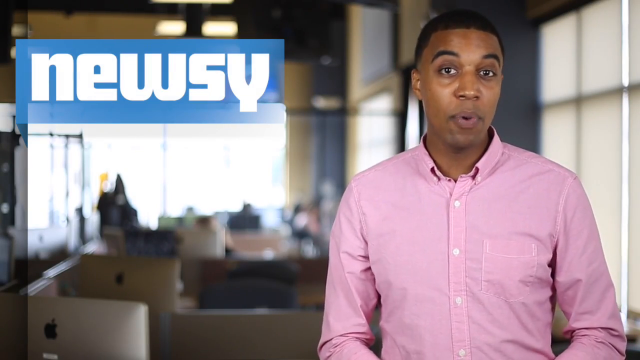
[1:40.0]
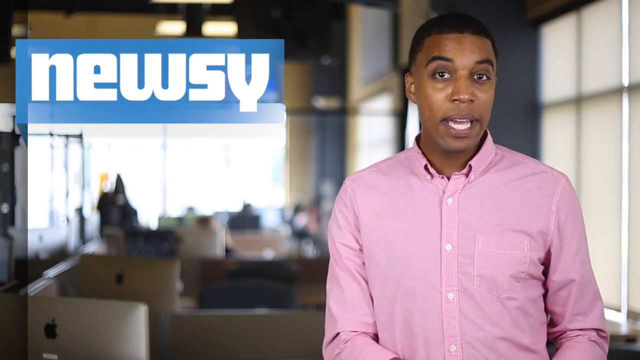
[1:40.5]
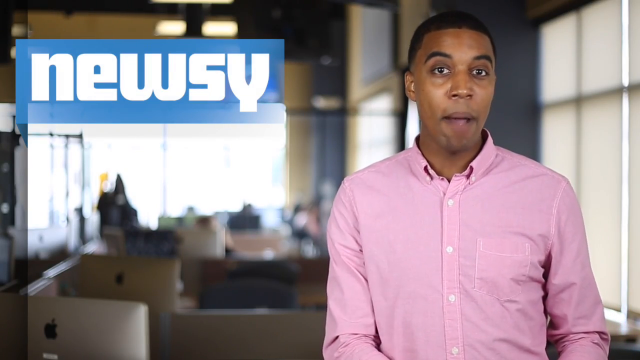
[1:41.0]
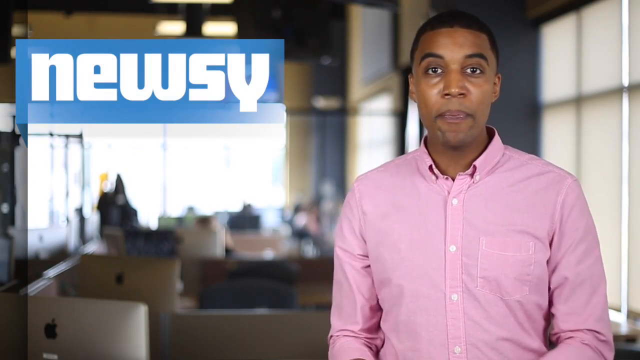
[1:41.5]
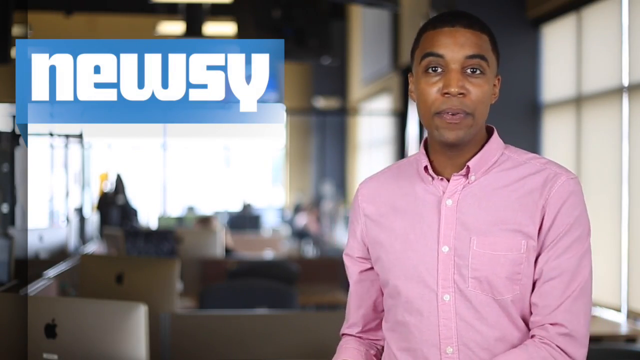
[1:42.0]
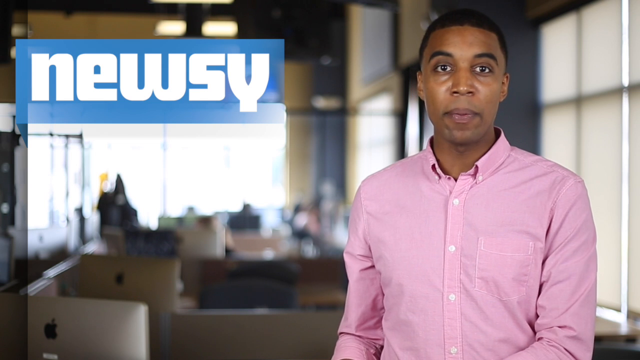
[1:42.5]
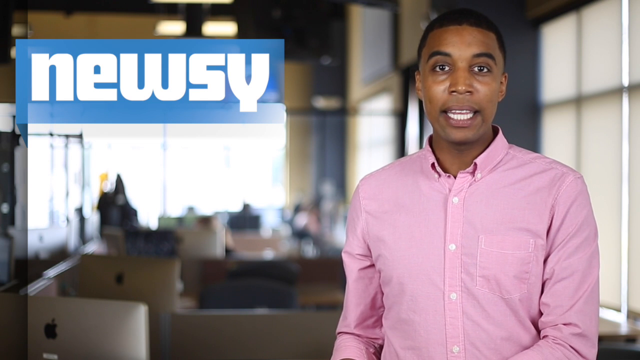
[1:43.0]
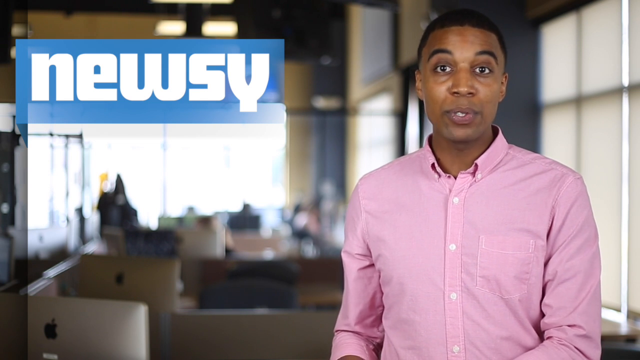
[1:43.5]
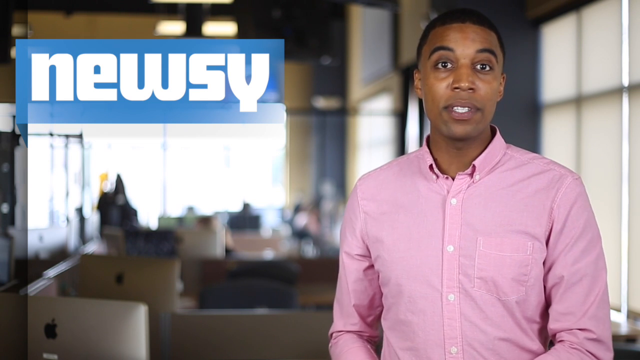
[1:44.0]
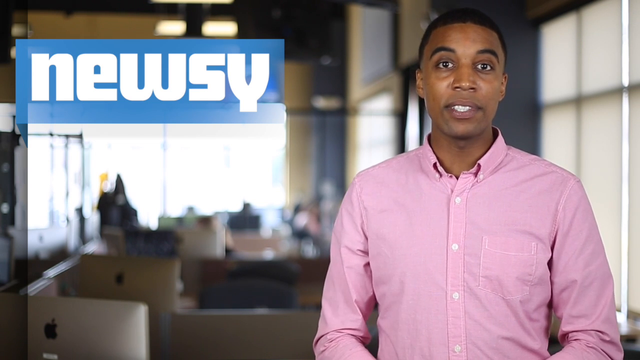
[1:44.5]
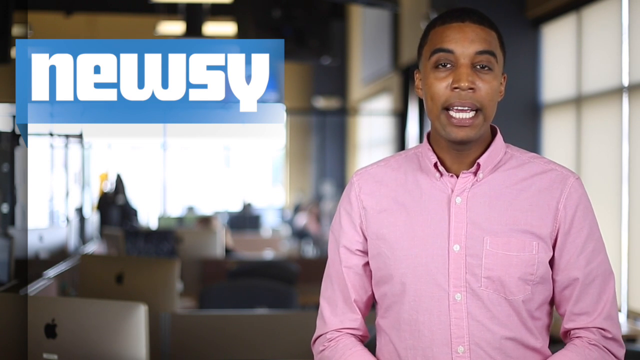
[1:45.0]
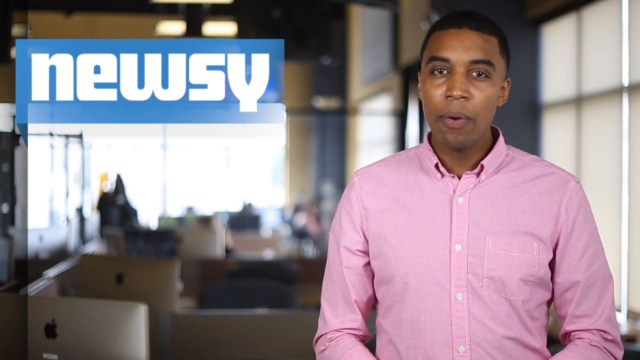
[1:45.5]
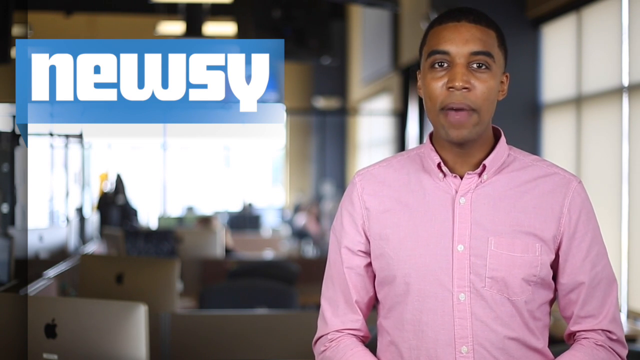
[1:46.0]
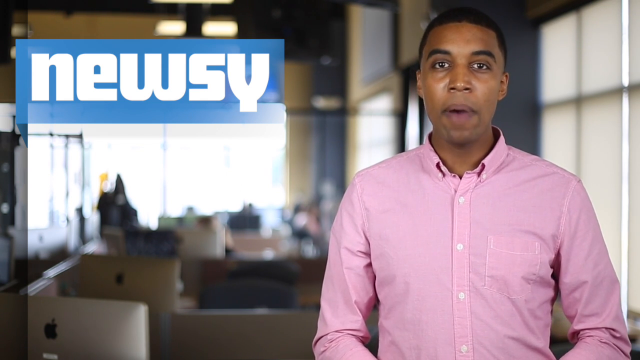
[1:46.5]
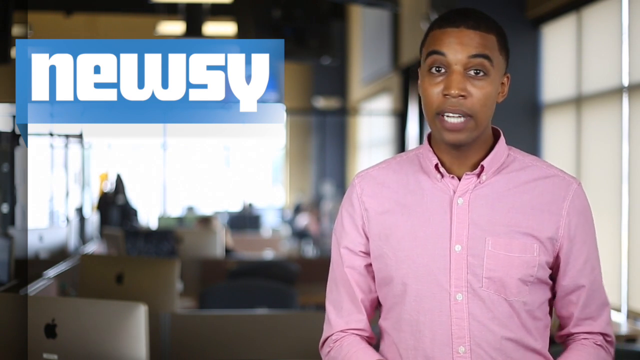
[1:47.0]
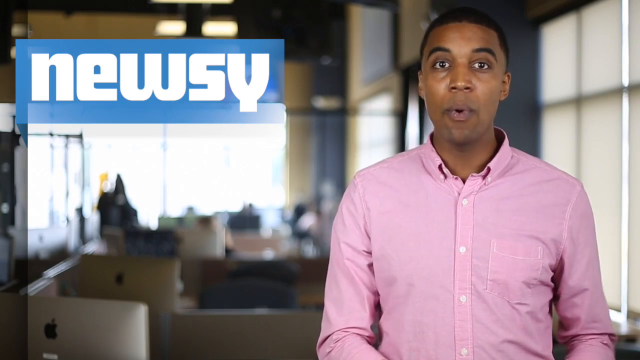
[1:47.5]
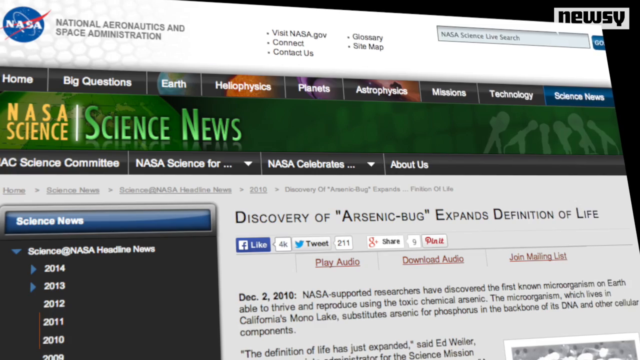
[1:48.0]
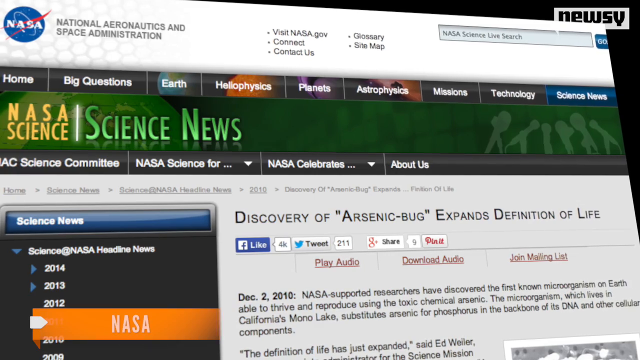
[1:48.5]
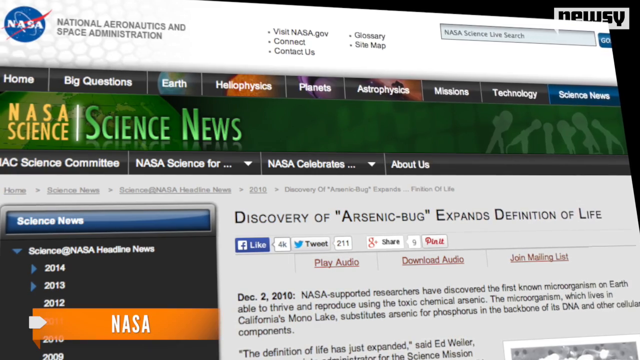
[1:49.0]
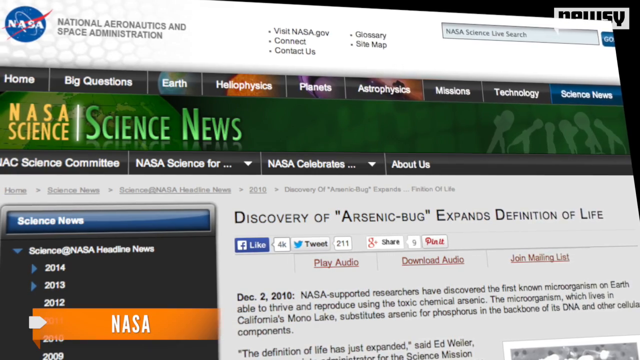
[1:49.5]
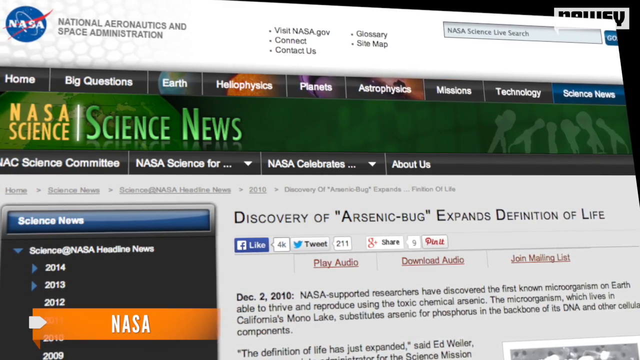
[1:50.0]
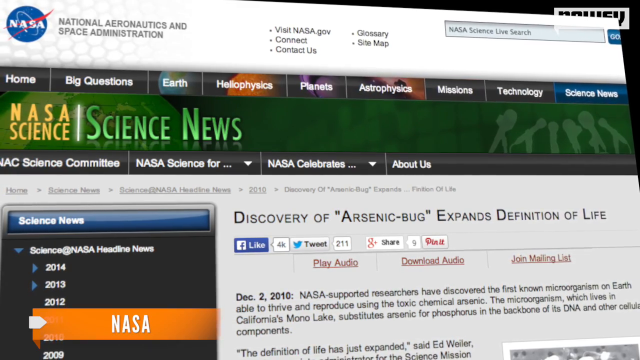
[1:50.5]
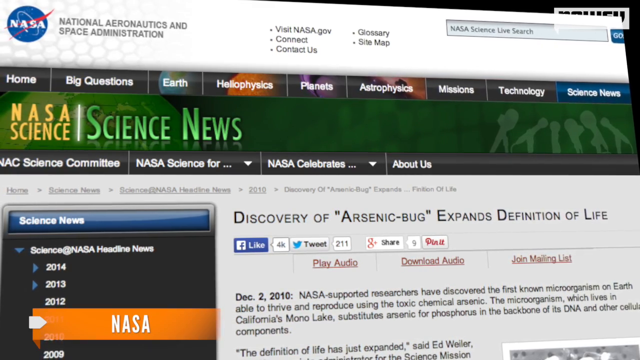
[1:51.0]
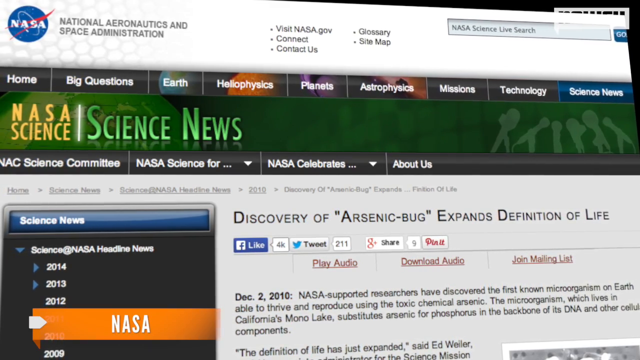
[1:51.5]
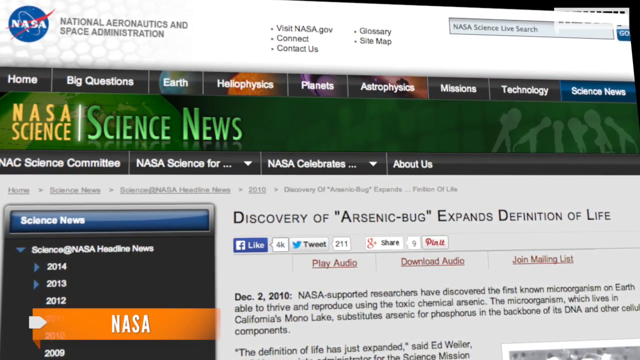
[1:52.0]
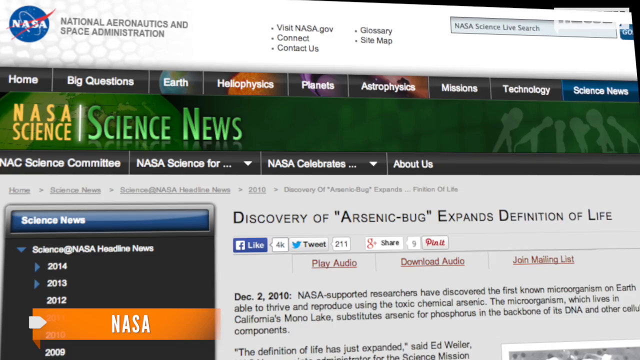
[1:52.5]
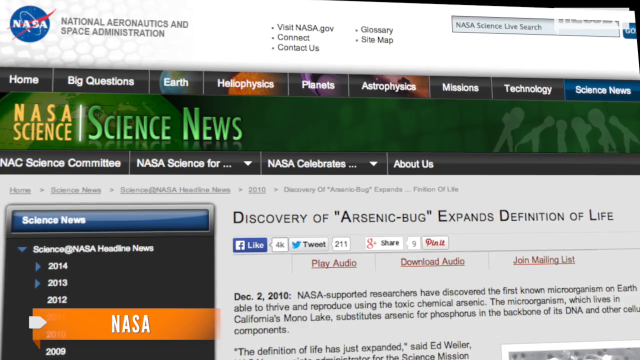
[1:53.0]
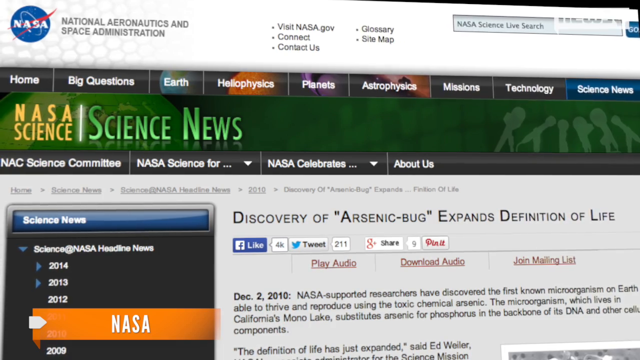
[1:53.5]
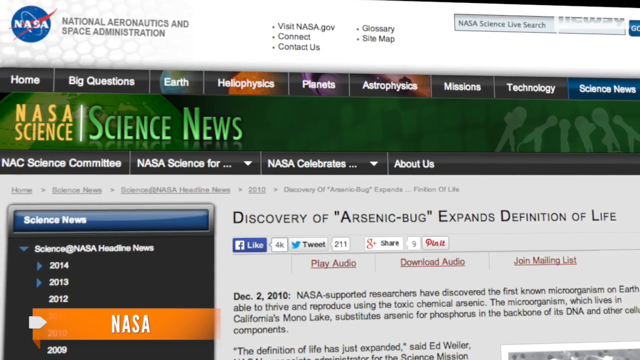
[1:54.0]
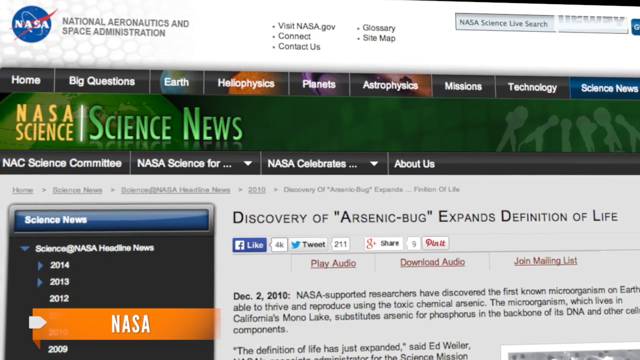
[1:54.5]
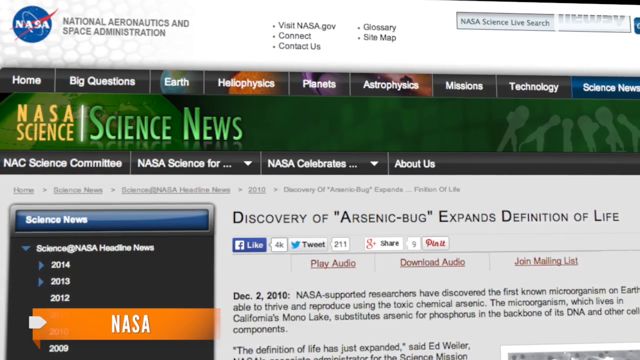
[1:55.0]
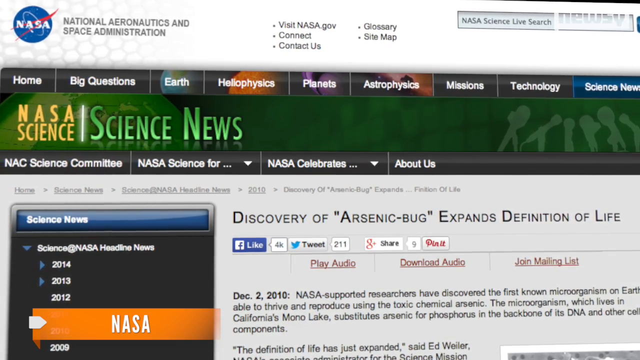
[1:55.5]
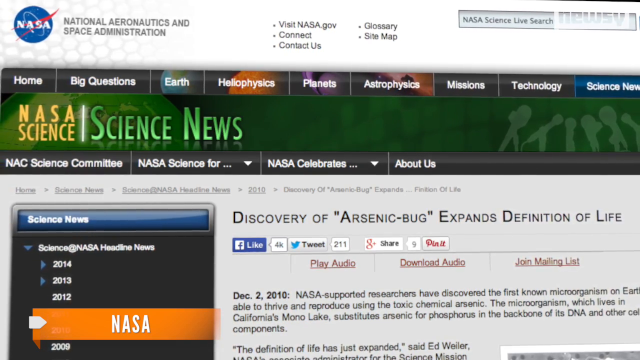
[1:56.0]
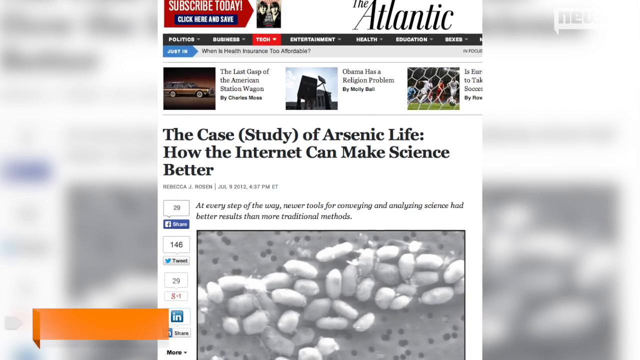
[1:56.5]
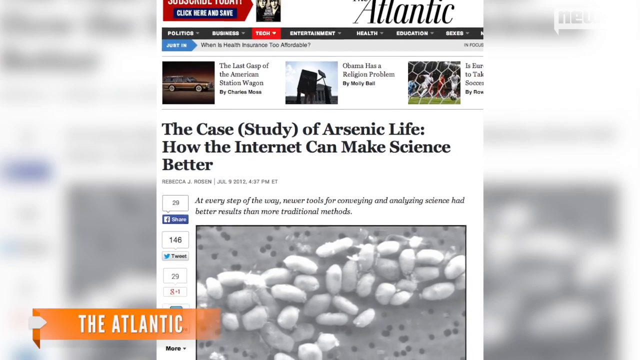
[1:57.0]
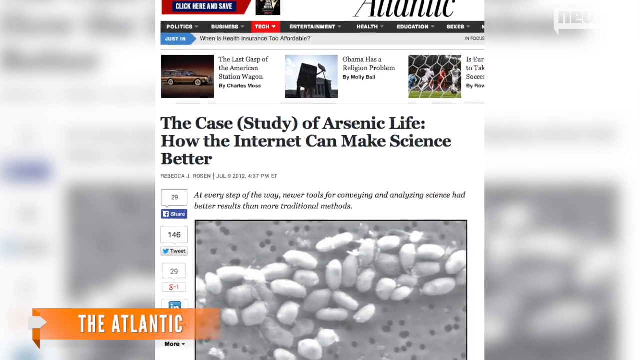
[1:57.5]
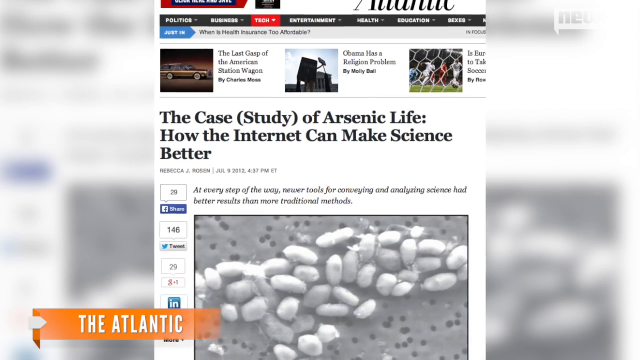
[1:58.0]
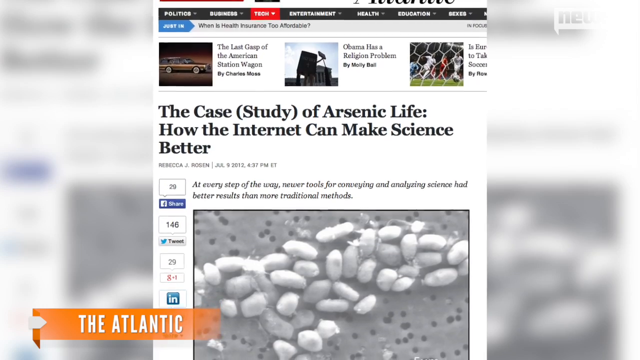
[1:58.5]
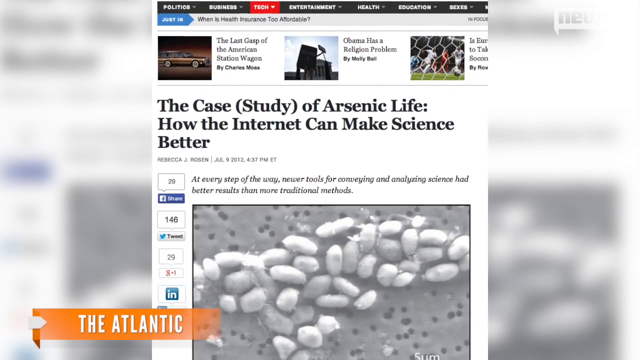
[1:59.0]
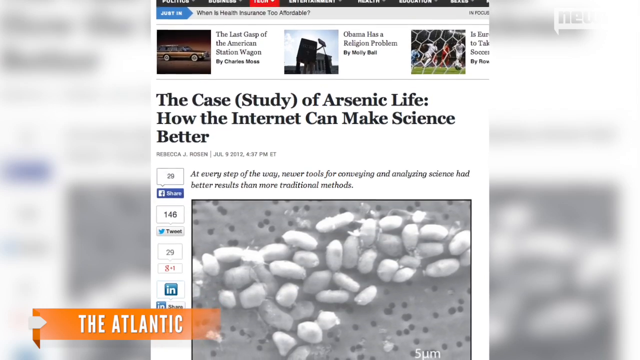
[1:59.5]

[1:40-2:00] The Newsy reporter, an African American man in a pink shirt, talks on screen. An article from NASA, "National Aeronautics and Space Administration," reads "Discovery of arsenic bug expands definition of life," dated "December 2nd, 2010," with text: "NASA supported researchers have discovered the first known microorganism on Earth able to thrive and reproduce using the toxic chemical arsenic. The microorganism, which lives in California's Mono Lake, substitutes arsenic for phosphorus in the backbone of the DNA and other cellular components." Another article follows, titled "The case study for arsenic life, how the internet can make science better," reading "Every step of the way, newer tools for conveying and analyzing science had better results than more traditional methods."